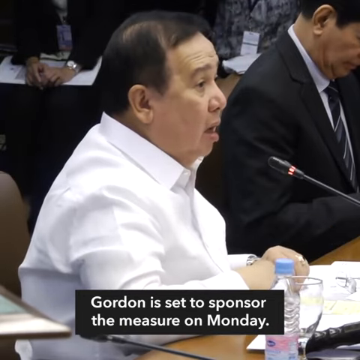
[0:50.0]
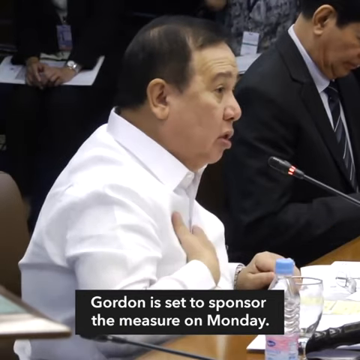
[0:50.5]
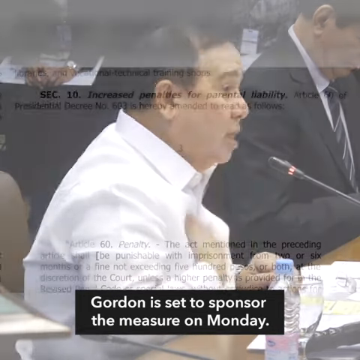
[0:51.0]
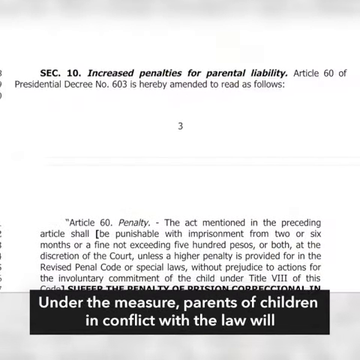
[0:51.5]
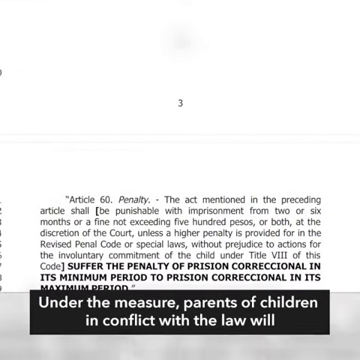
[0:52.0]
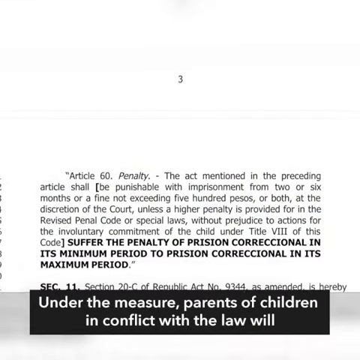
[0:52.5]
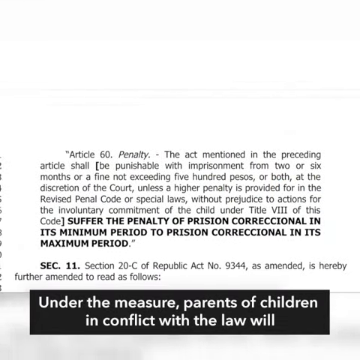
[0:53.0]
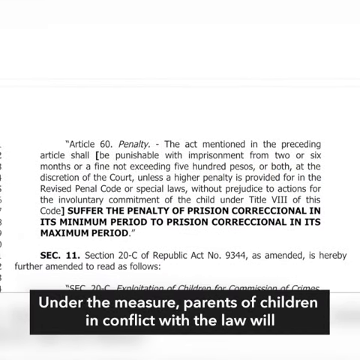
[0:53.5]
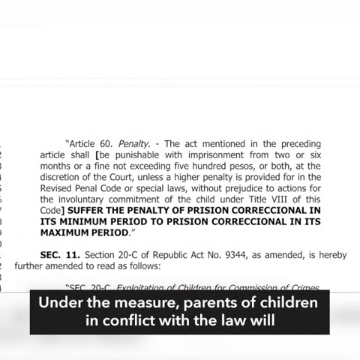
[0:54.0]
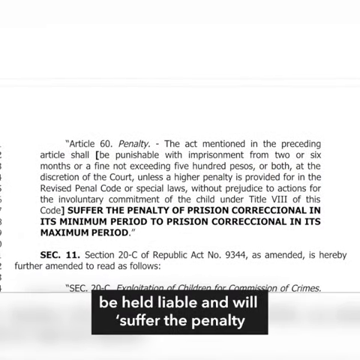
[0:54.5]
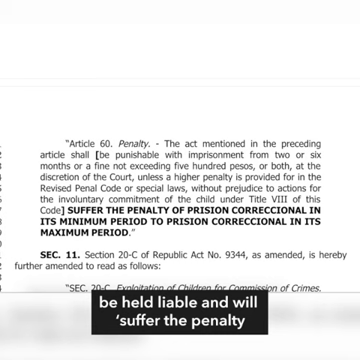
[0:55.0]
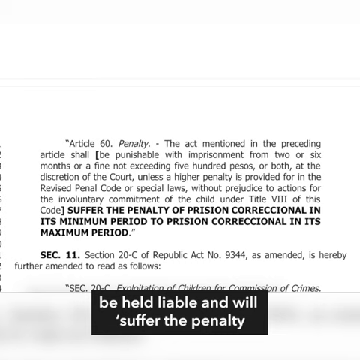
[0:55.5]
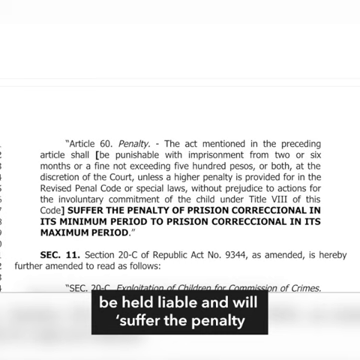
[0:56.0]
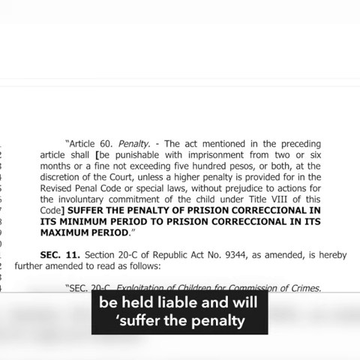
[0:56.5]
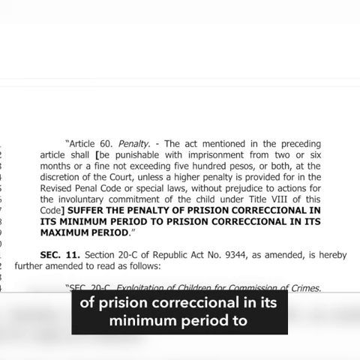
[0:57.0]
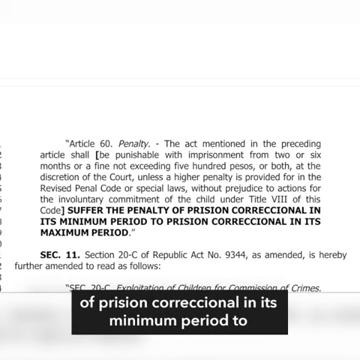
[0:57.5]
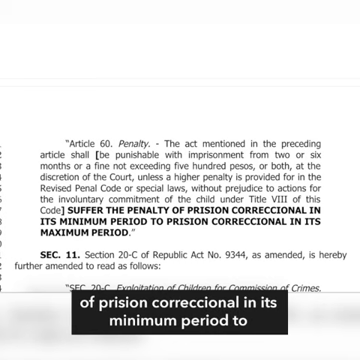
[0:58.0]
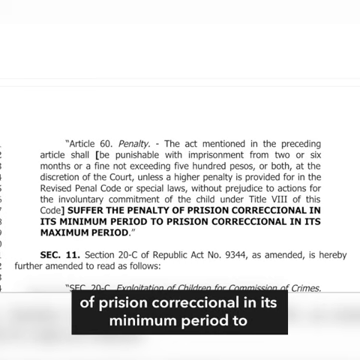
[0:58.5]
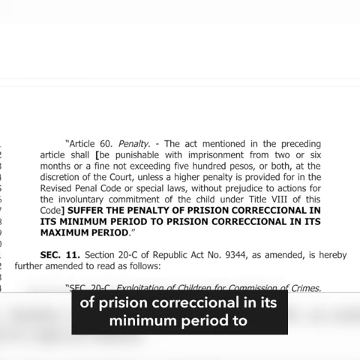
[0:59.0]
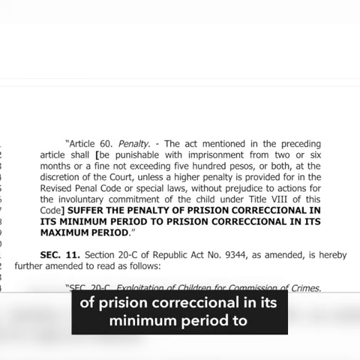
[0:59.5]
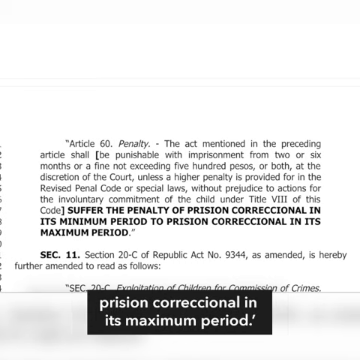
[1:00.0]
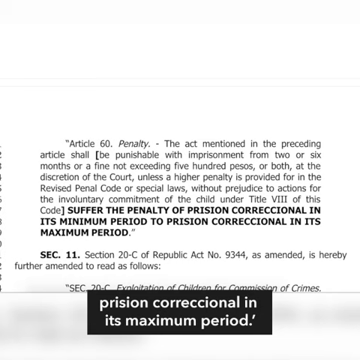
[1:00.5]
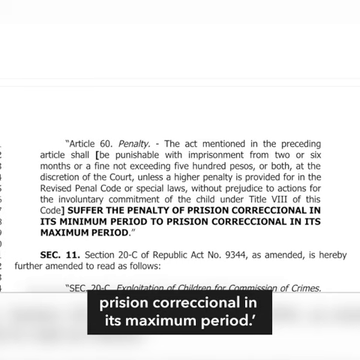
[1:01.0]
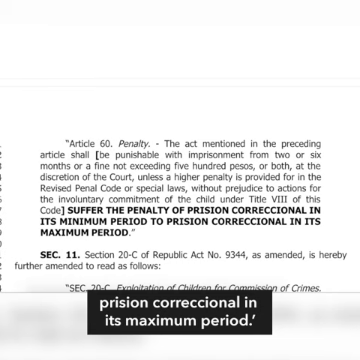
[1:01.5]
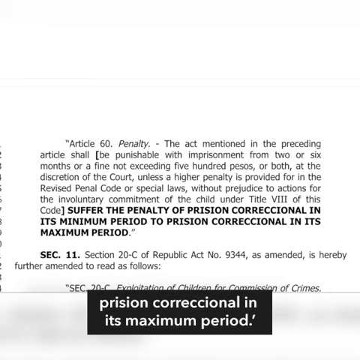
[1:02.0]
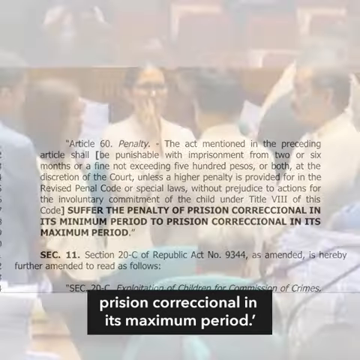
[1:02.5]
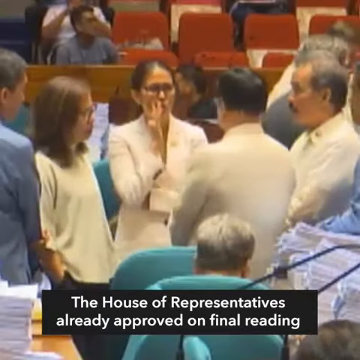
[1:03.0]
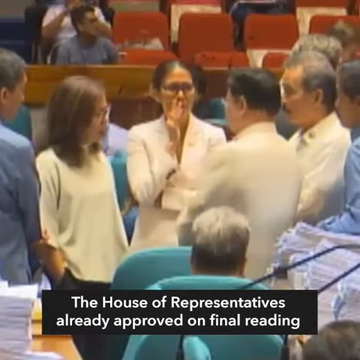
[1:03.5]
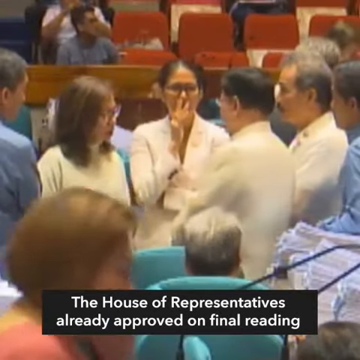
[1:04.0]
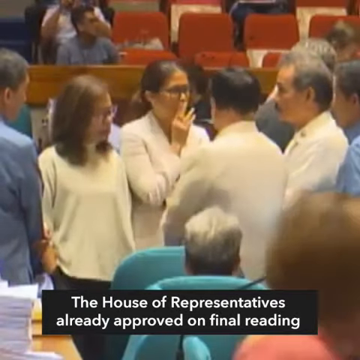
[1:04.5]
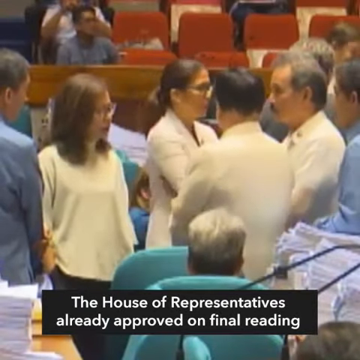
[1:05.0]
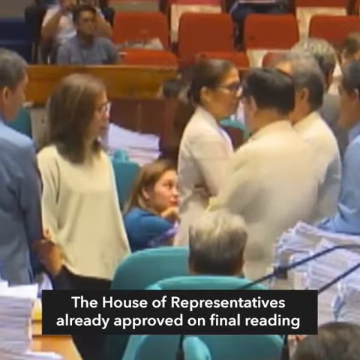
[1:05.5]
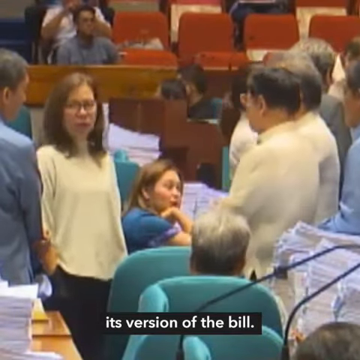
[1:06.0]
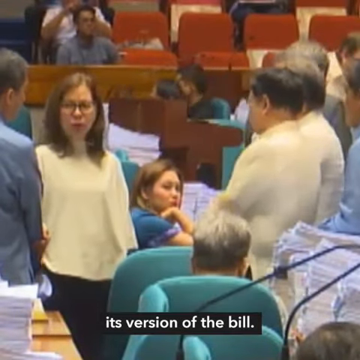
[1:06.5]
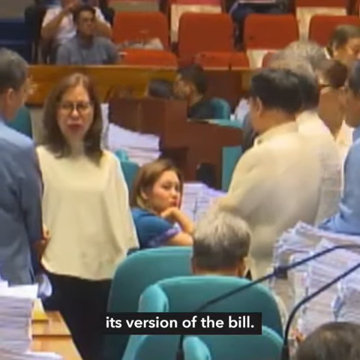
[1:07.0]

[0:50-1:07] The man continues speaking into the mic until the video switches to the report page, which scrolls down slowly and stops on a section further down showing article 60. The page stays on screen while some text changes at the bottom in a black box. The screen then switches to a video of some people in white suits and white shirts, along with some in blue shirts, speaking near the desks on the ground floor of the theater. The papers on the desks are stacked up, and a few people are sitting around. A group of people talking is the main focus of the shot, and the text at the bottom keeps changing.